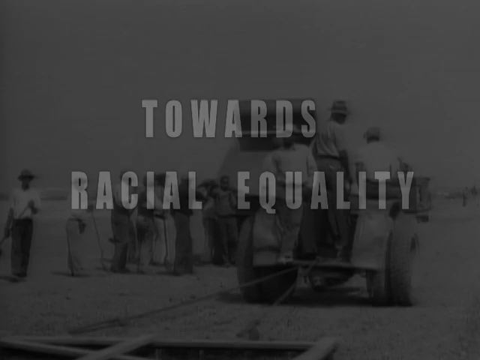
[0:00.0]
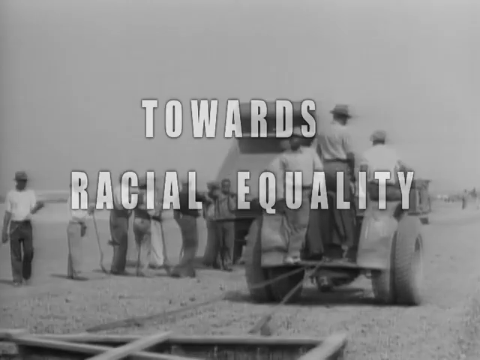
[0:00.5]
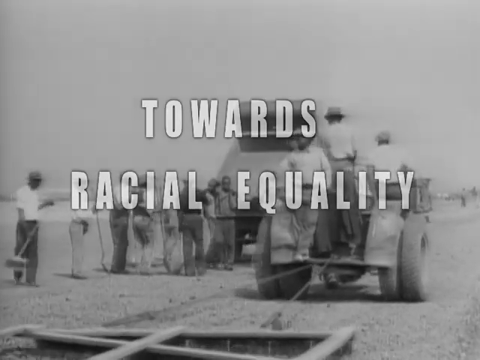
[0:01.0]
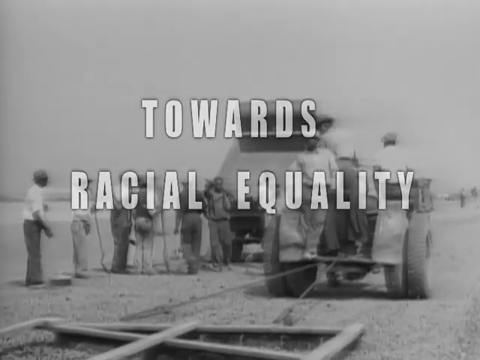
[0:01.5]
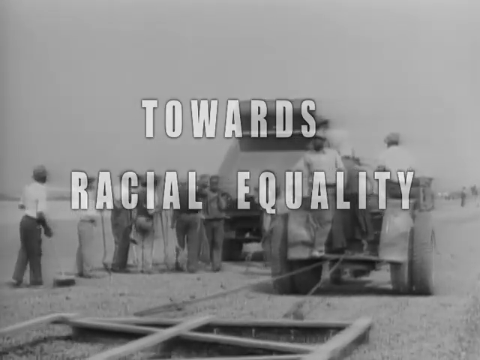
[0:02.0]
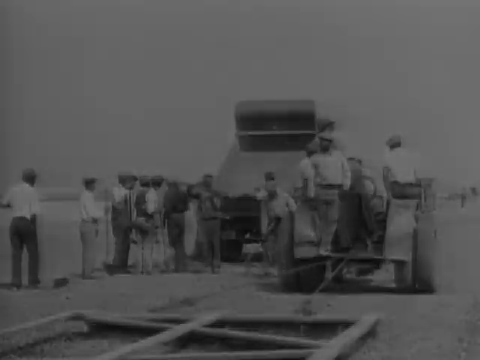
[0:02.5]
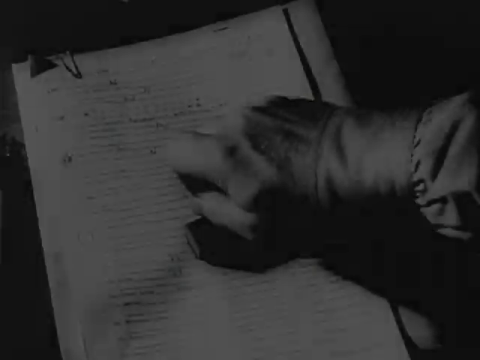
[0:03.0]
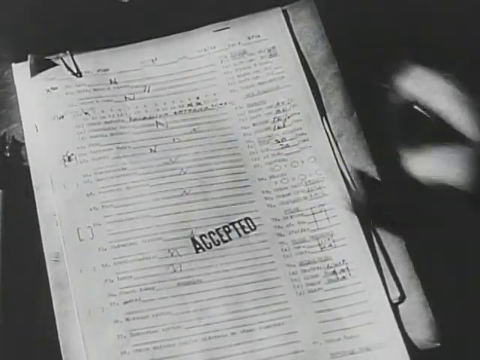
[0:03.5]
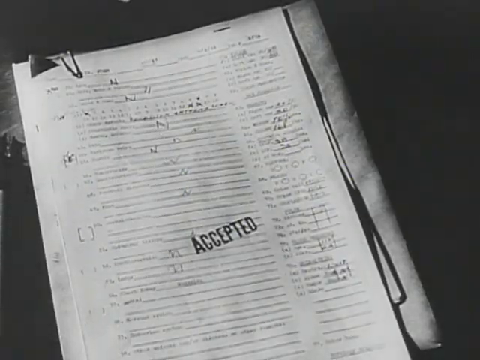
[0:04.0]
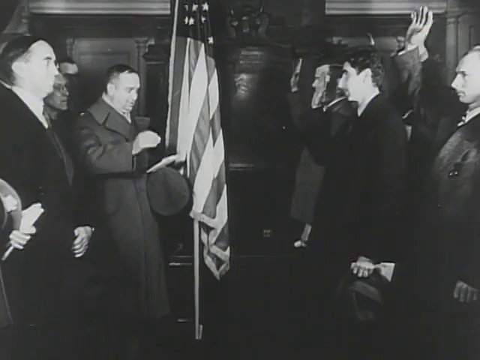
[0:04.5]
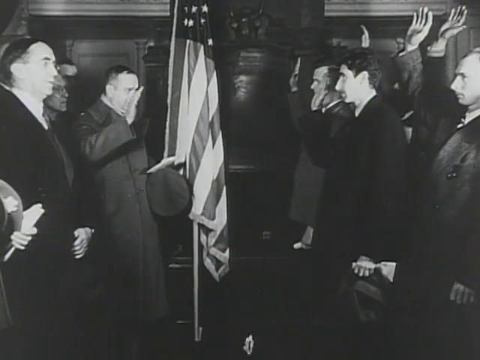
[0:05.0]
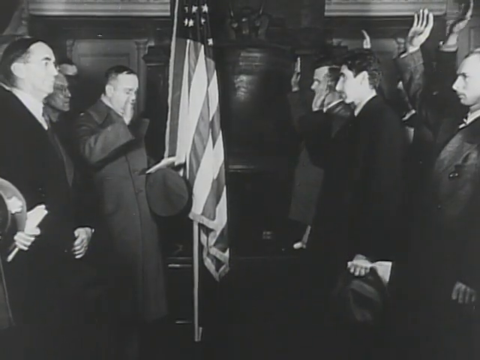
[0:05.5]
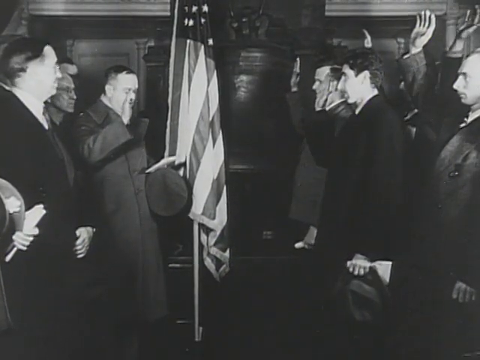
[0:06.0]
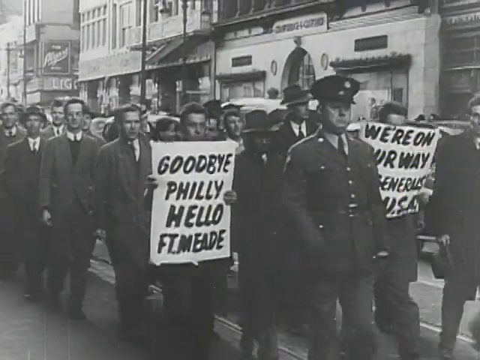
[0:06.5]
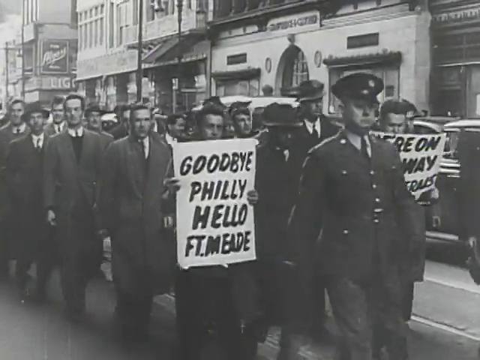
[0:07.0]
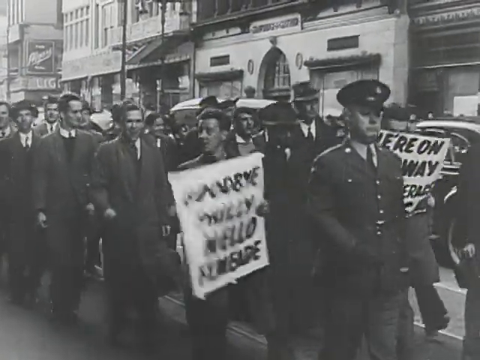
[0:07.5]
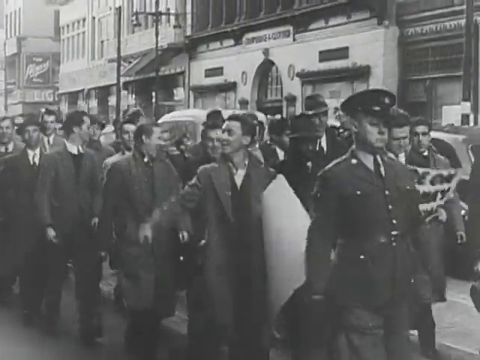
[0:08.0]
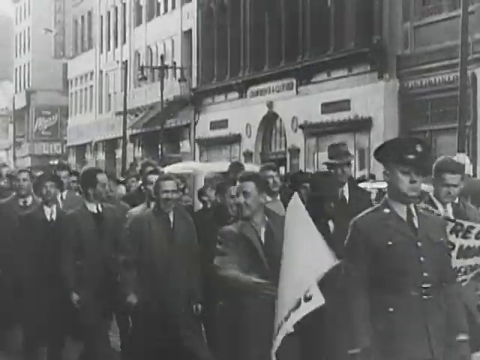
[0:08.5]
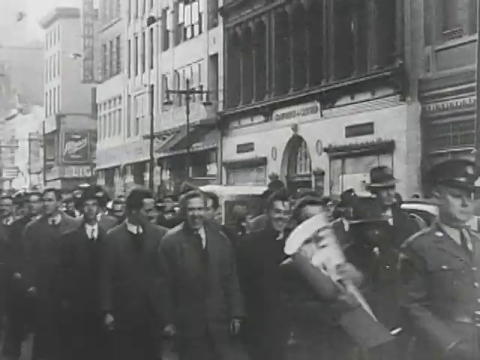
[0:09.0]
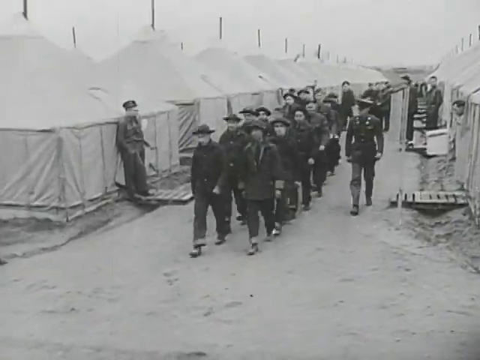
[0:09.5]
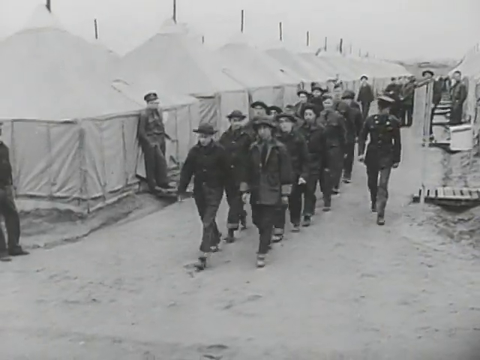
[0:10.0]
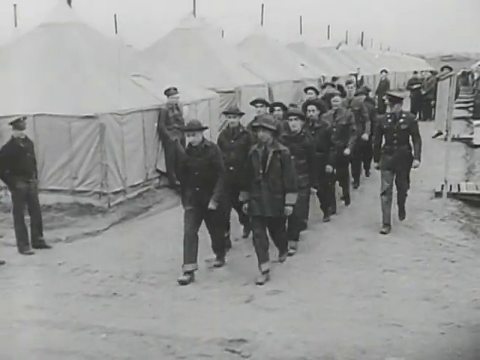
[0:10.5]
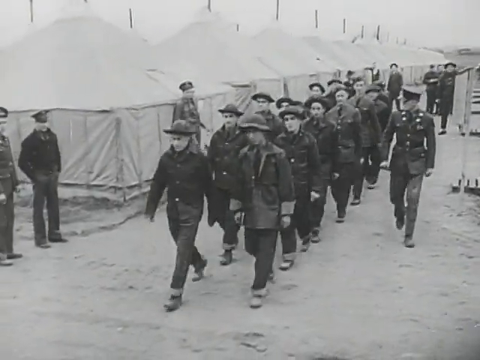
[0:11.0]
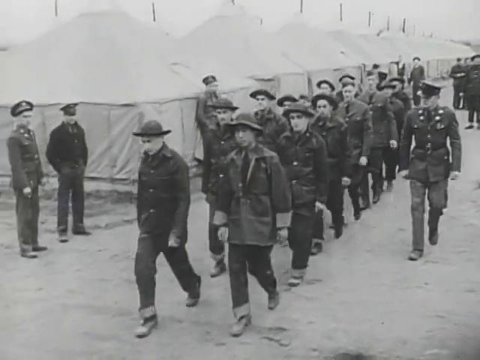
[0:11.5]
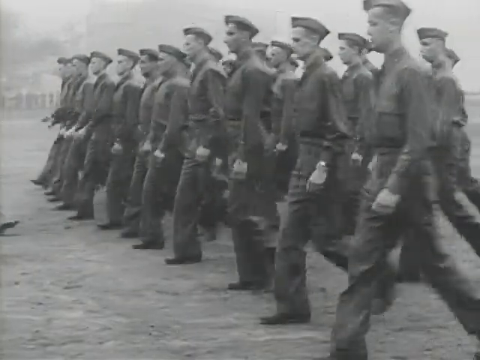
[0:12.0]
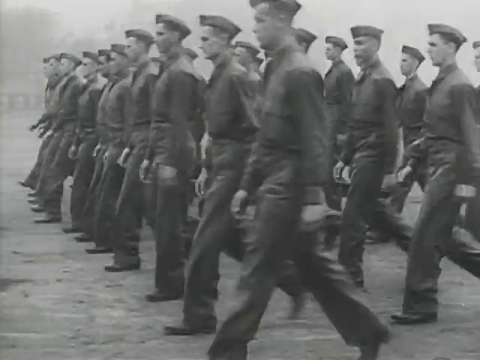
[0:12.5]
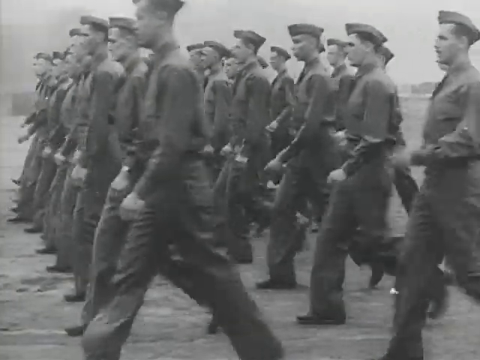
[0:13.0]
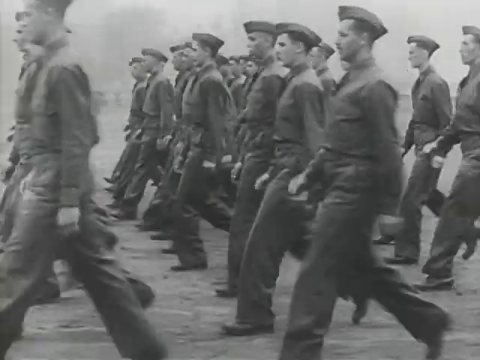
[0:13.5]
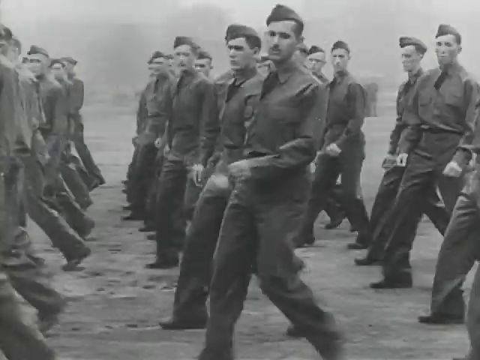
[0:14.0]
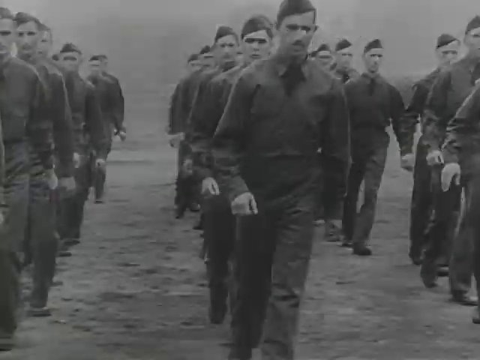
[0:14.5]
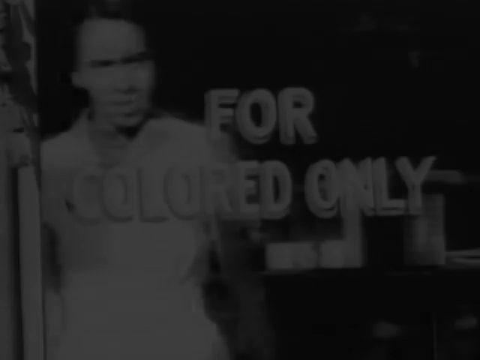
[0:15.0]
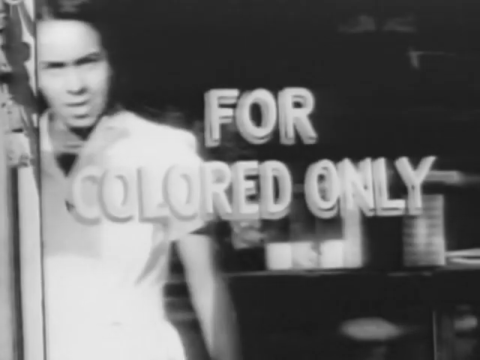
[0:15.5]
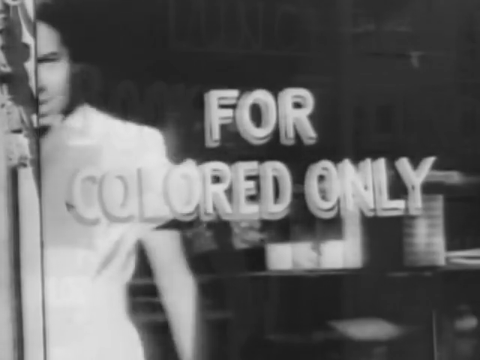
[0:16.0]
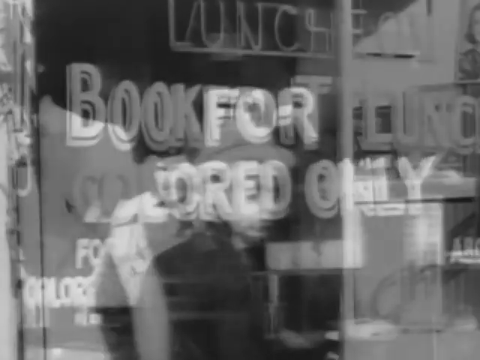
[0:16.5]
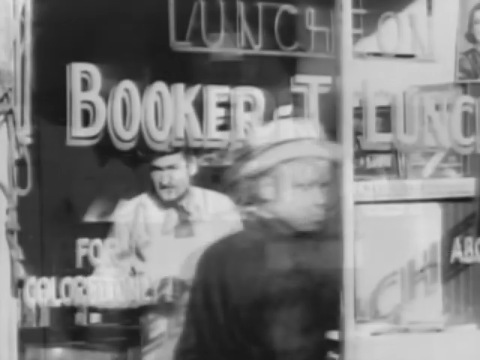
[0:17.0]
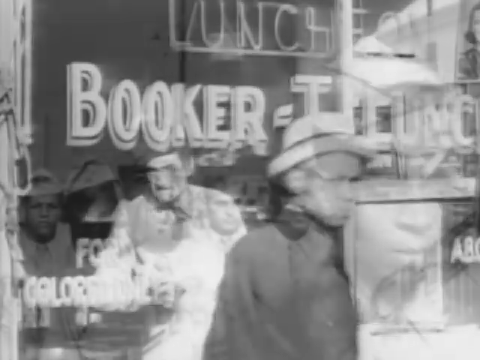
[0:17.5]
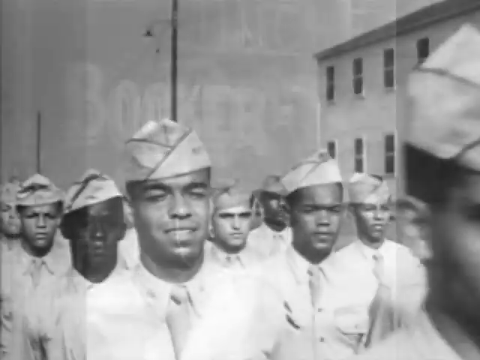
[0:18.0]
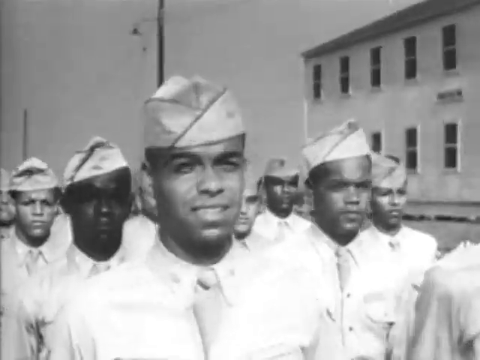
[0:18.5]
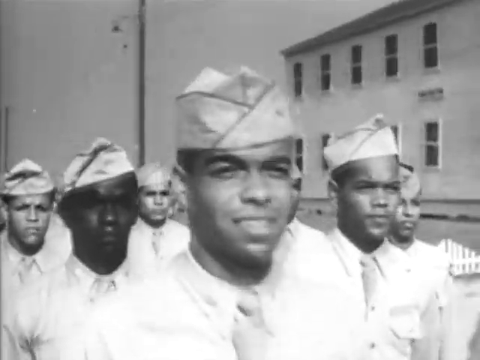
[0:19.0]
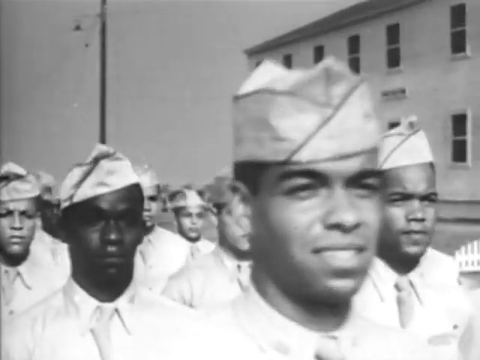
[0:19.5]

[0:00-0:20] The words "towards racial equality" appear on the screen, with old black-and-white footage behind them of what are possibly some soldiers, under skies that look gray, possibly sunny. The footage shows some Black people. Papers that say "accepted" appear. A president, apparently Roosevelt, swears in some people in front of the American flag. Then "goodbye Philly, hello F.T. Meade" is shown, with soldiers and people walking down a street in a black-and-white photo, with tall buildings in the background on the right side of the screen. Next comes what looks like a military area with tents or barracks, where soldier recruits walk in formation with a sergeant at their side; mostly white people are seen here. Then "for colored only" appears, followed by "Booker T", possibly referring to Booker T Washington, and a group of Black soldiers.